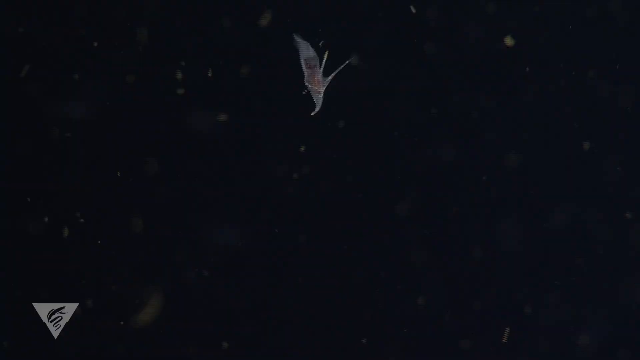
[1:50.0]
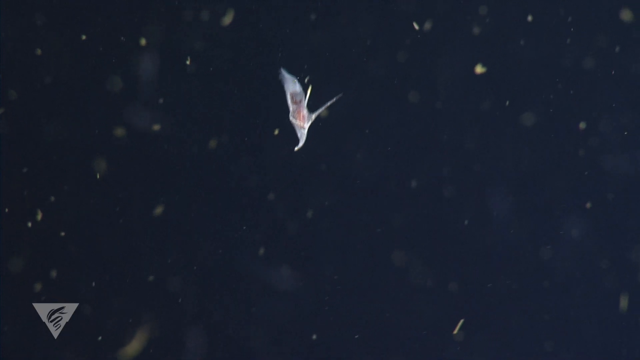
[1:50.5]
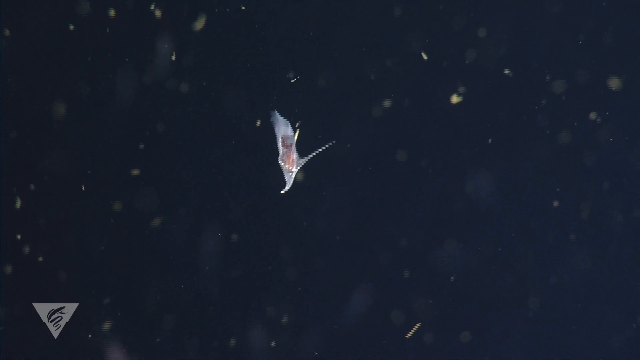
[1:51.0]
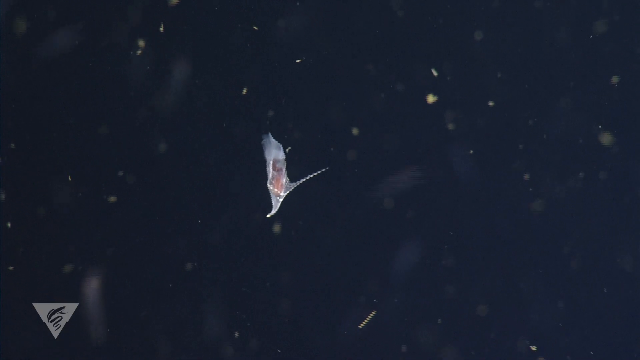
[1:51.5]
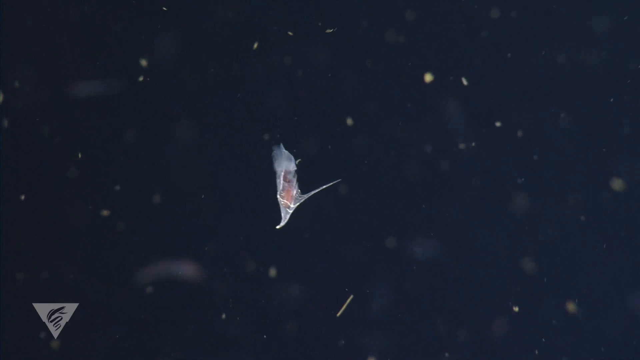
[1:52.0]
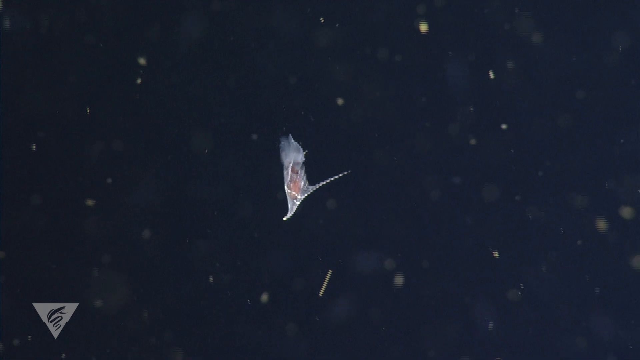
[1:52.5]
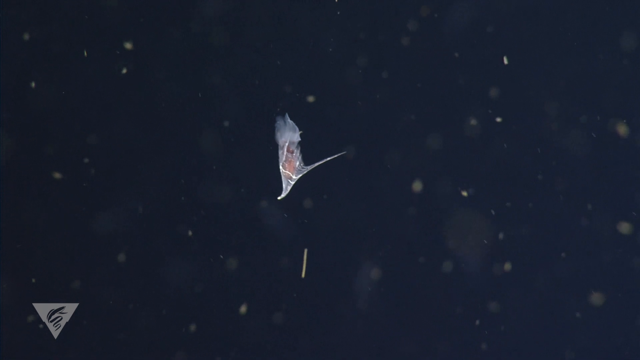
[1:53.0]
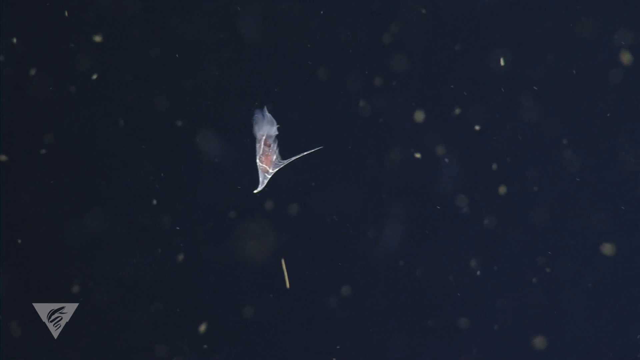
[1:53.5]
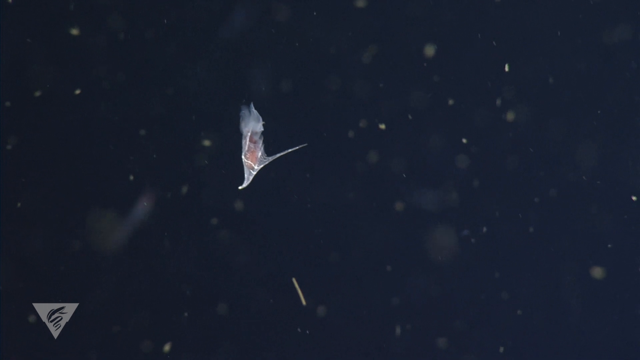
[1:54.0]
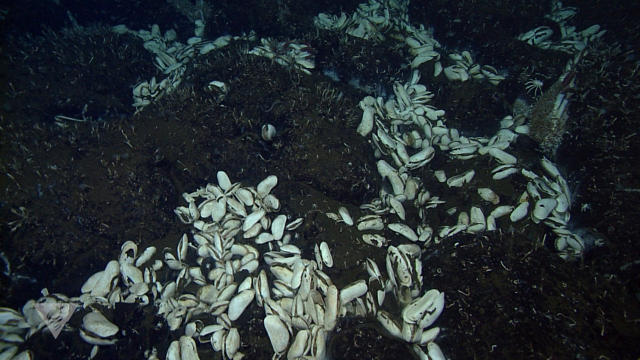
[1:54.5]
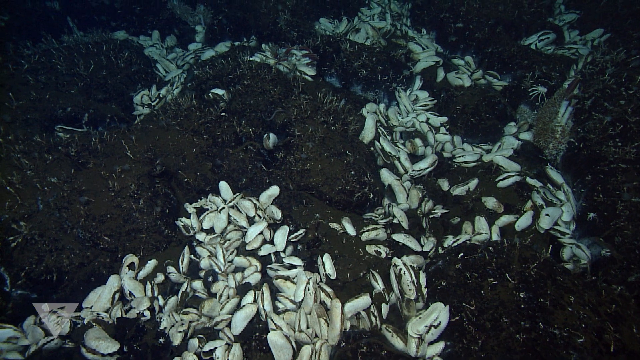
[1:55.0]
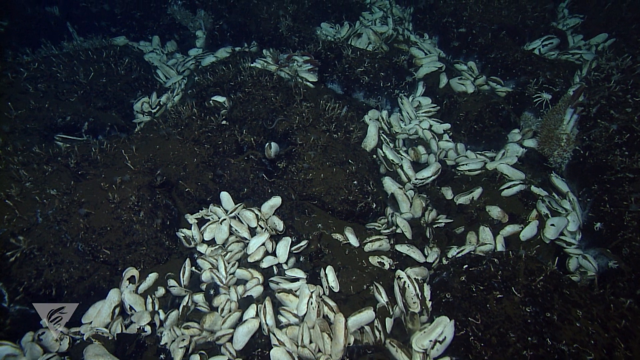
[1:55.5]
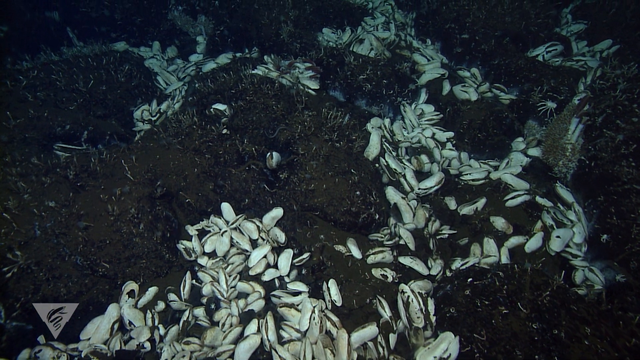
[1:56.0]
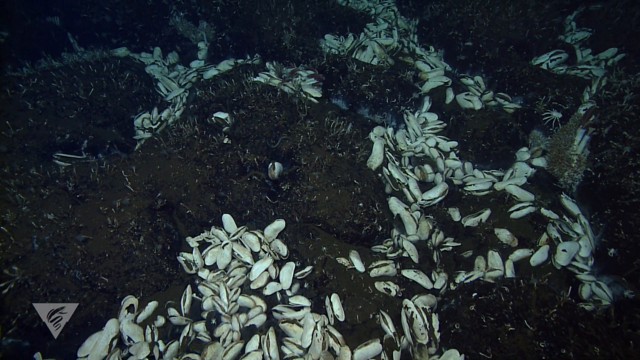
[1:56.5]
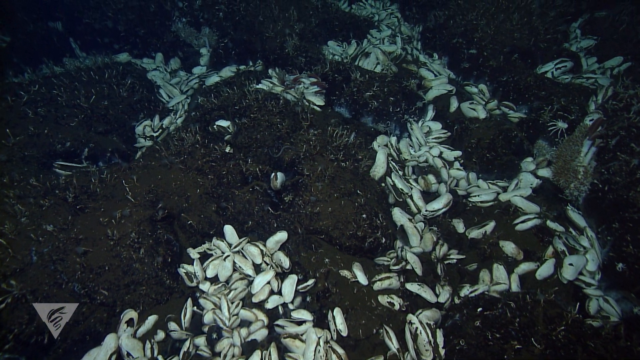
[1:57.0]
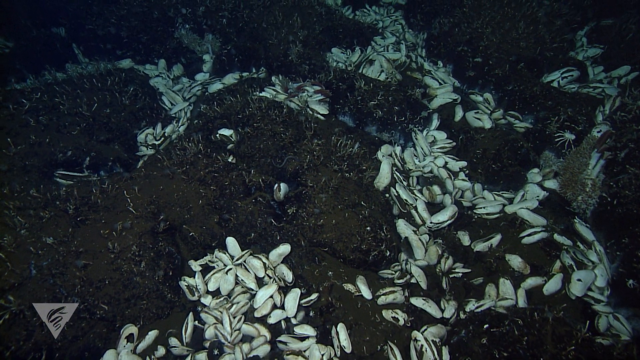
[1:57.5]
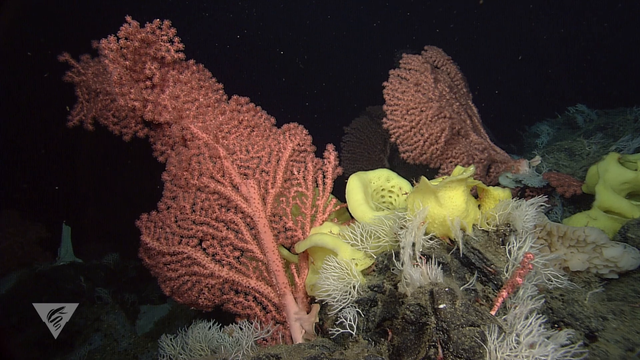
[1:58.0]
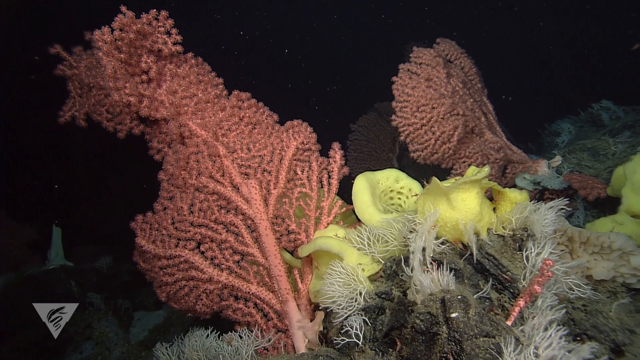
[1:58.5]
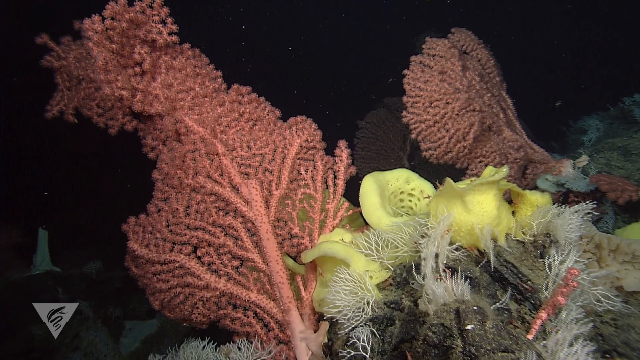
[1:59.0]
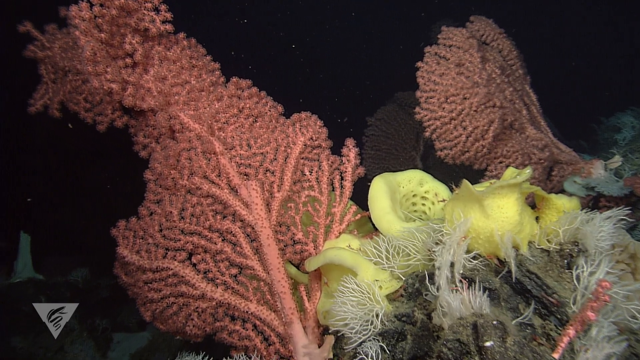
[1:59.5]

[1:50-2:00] A pteropod floats through the sea; it looks like a large bug underwater. The scene then changes to a bunch of clams on the seabed, which looks like a colony of clams attached to the seafloor, most likely breeding. The next scene shows a coral reef deep down in the sea, with huge corals in pinkish, yellow and white colors growing off the reef.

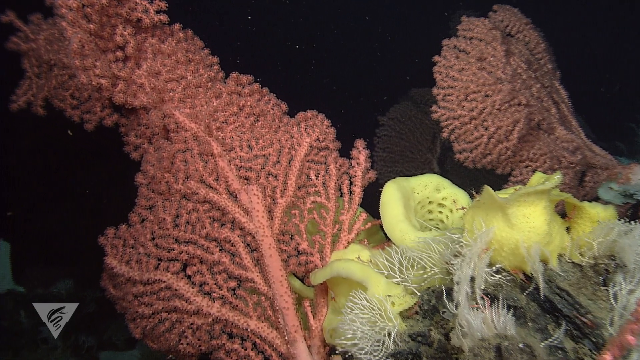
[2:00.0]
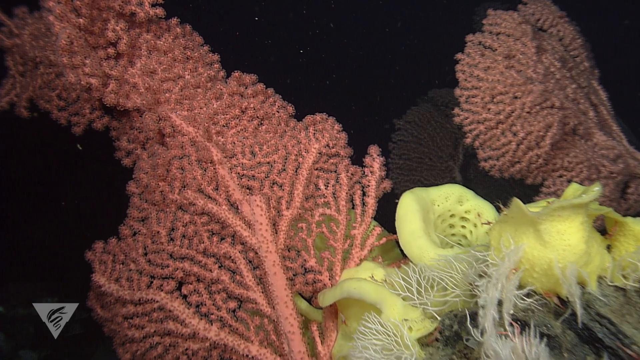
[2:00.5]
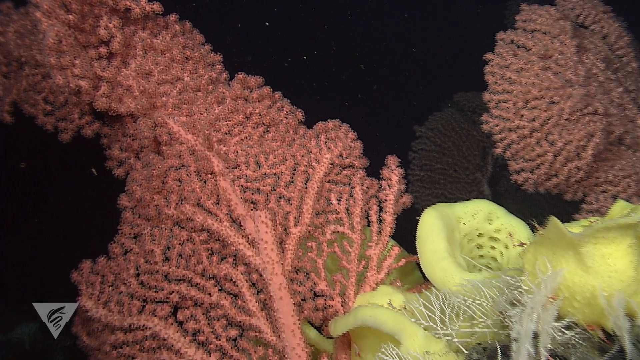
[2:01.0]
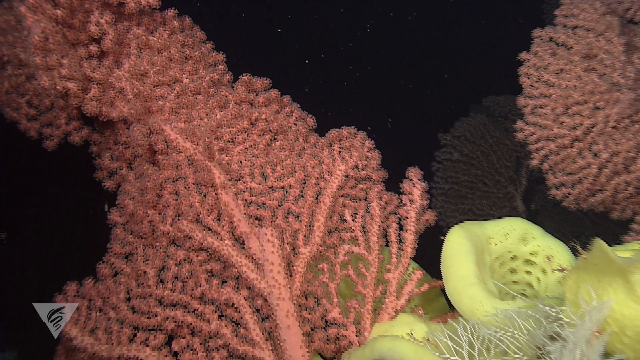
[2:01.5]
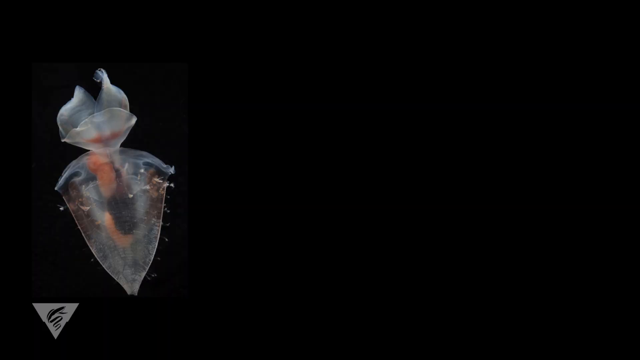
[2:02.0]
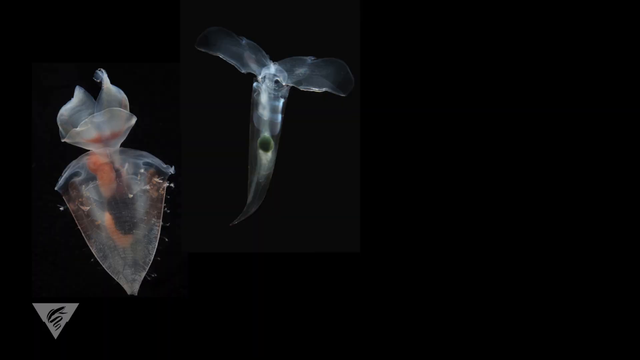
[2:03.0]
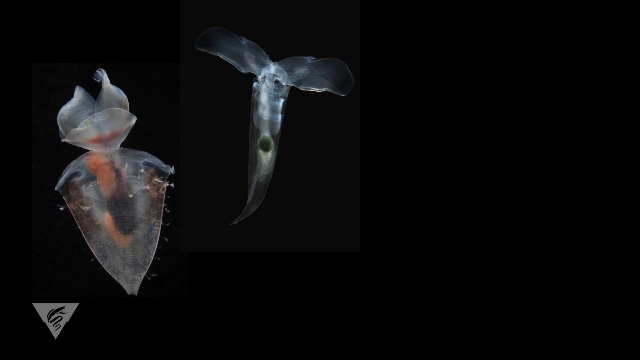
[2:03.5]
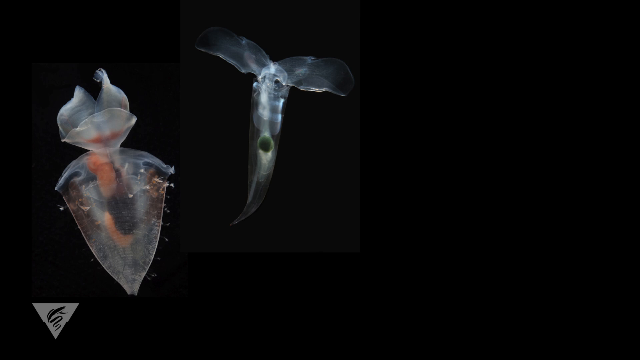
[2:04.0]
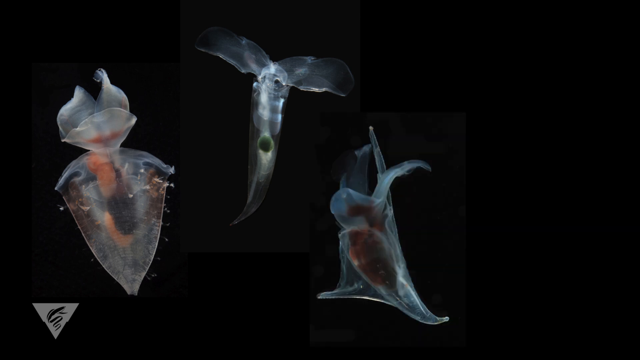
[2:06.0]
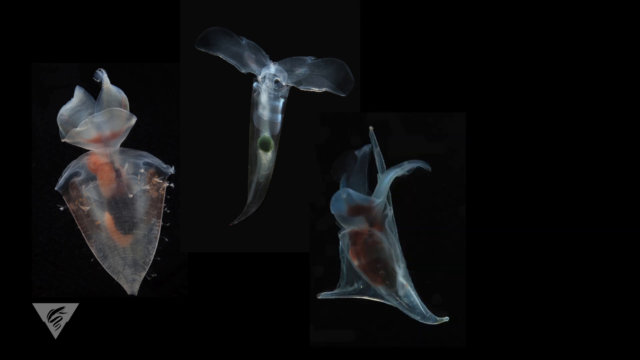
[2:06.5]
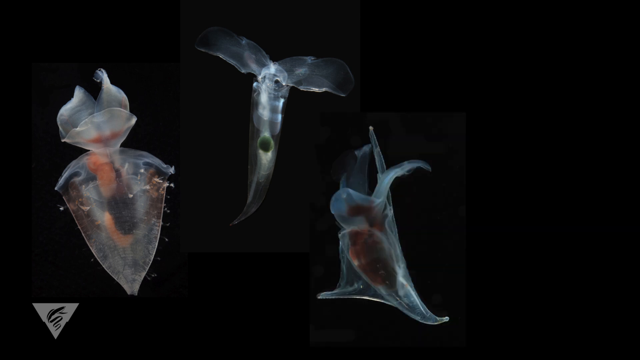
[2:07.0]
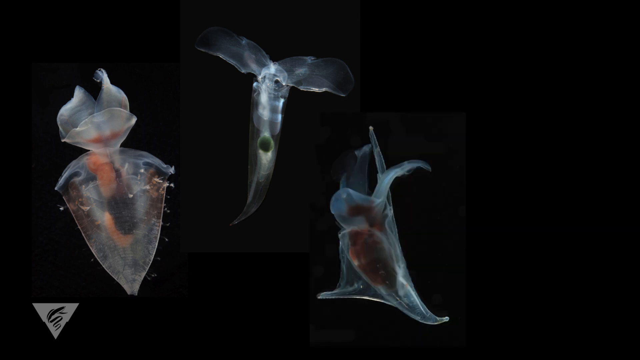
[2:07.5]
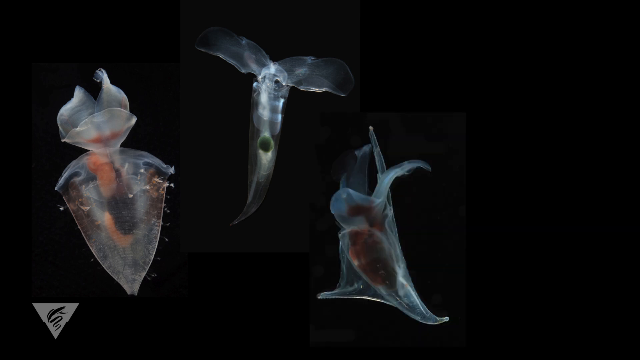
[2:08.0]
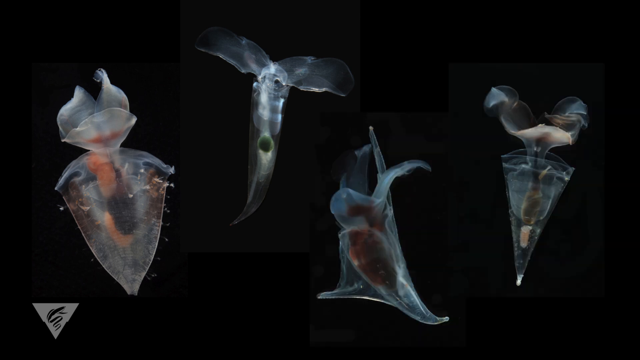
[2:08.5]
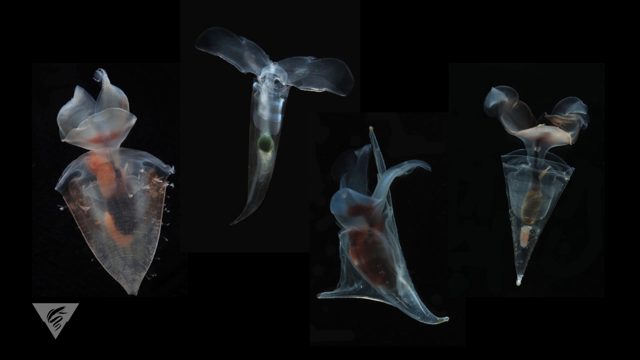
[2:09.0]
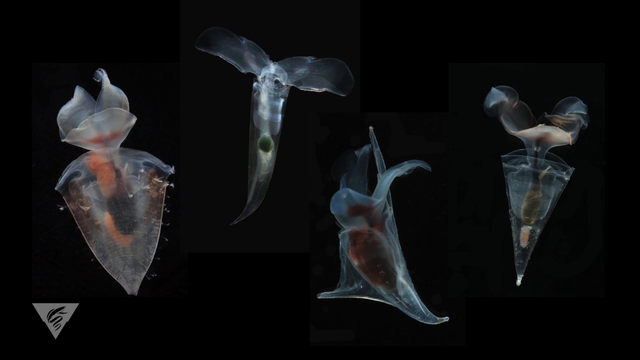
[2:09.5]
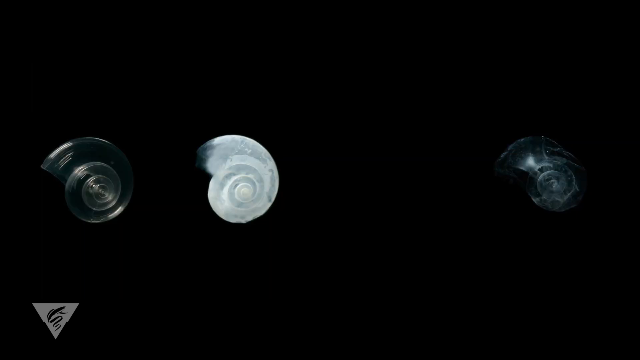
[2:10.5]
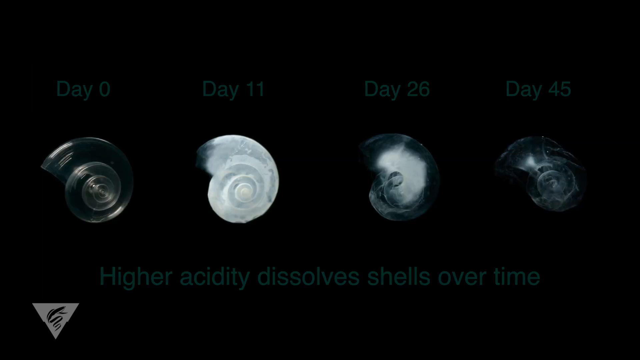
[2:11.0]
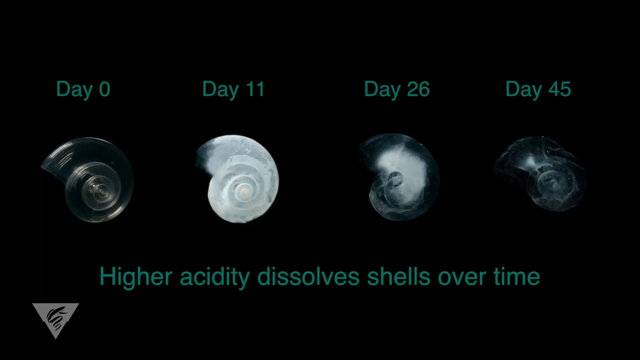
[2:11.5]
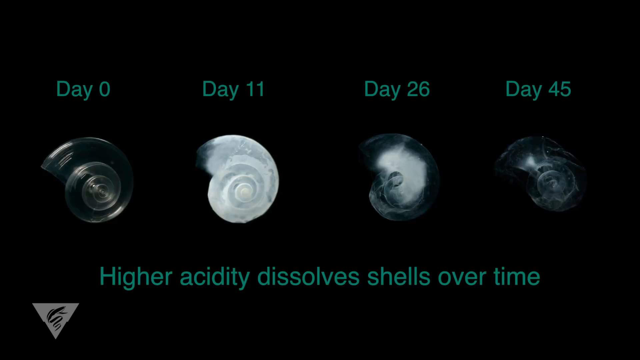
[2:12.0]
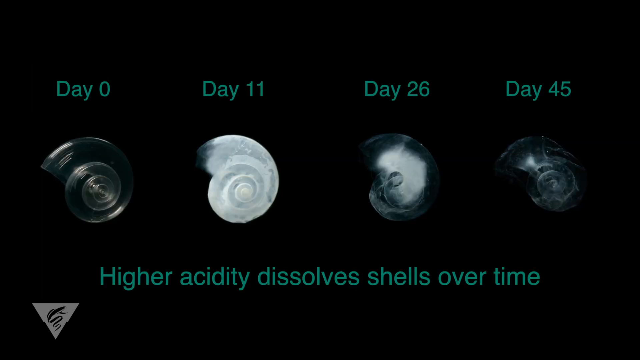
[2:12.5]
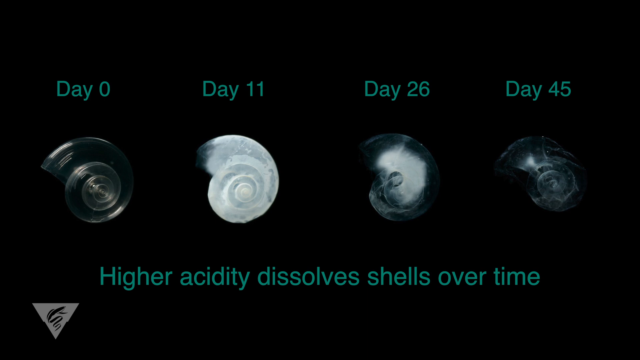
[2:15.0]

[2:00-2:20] A coral reef deep in the sea is made up of plants or growths that are pinkish red, yellow and white. The video transitions to static images of pteropods. Four different ones are on the screen, all very different looking: some look like little sea slugs, and some look like they could be some type of sea bug. They have translucent skin with the organs visible inside, ranging from pinkish to red to dark red, and little wings or flippers on either side of their bodies. The video then changes to their growth cycle, with the text "higher acidity dissolves shells over time."